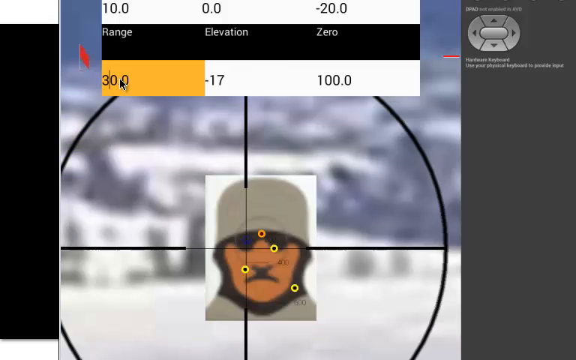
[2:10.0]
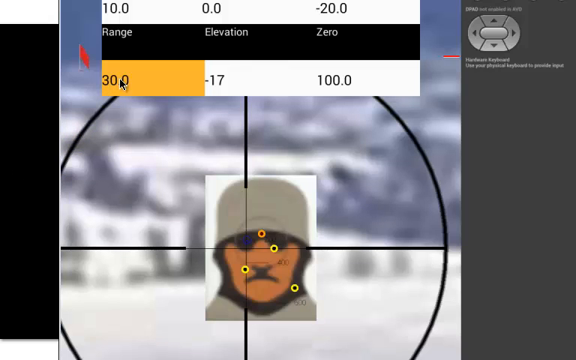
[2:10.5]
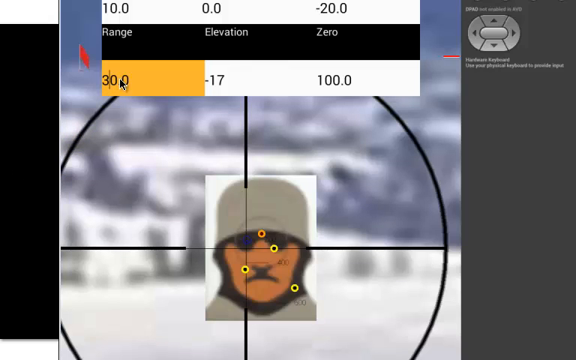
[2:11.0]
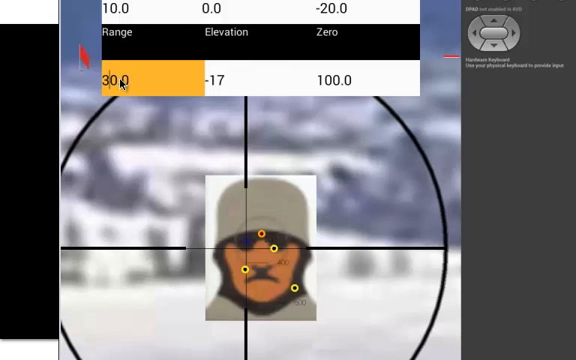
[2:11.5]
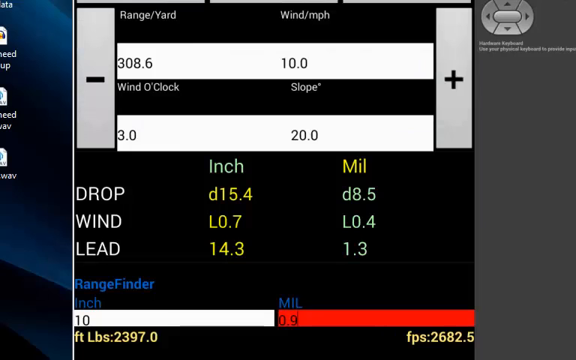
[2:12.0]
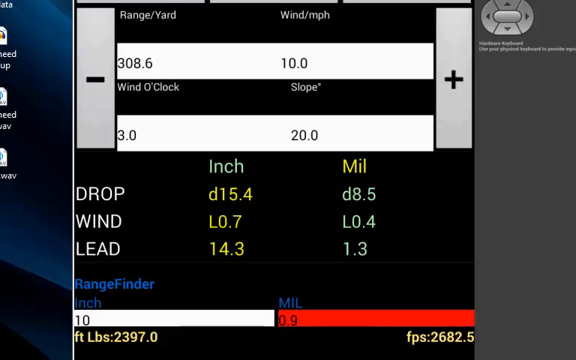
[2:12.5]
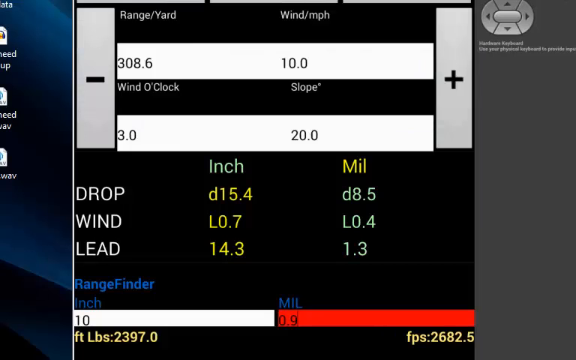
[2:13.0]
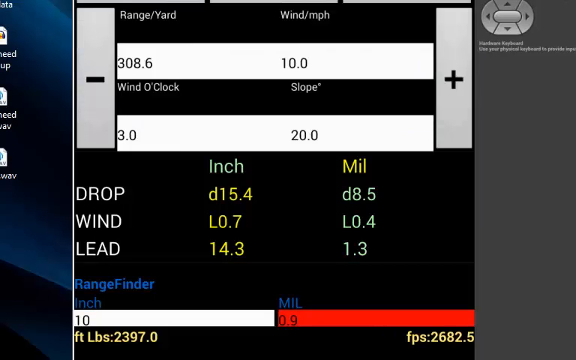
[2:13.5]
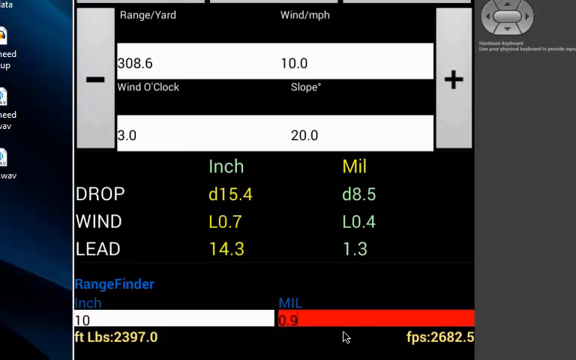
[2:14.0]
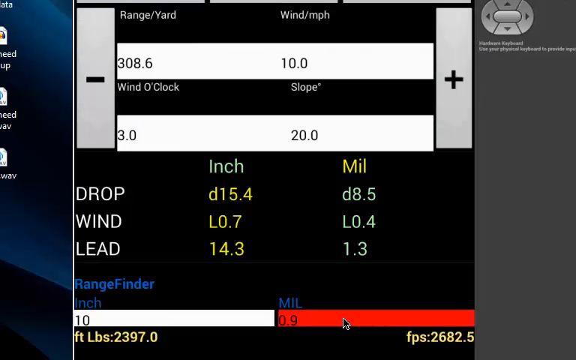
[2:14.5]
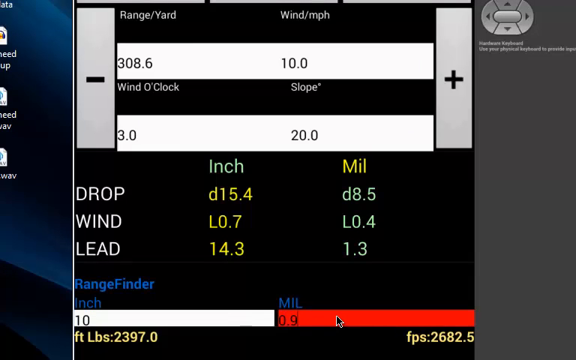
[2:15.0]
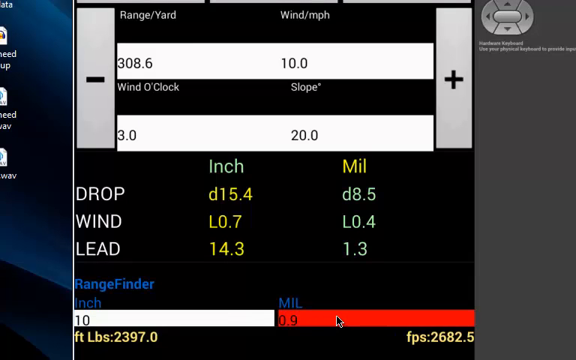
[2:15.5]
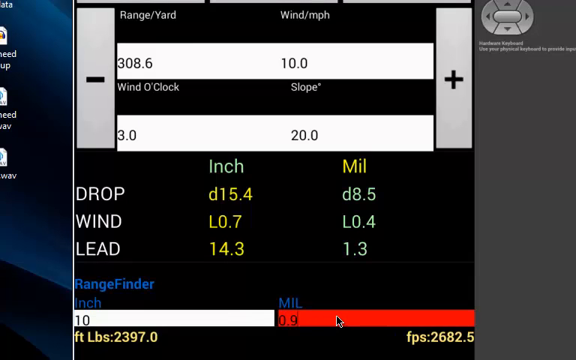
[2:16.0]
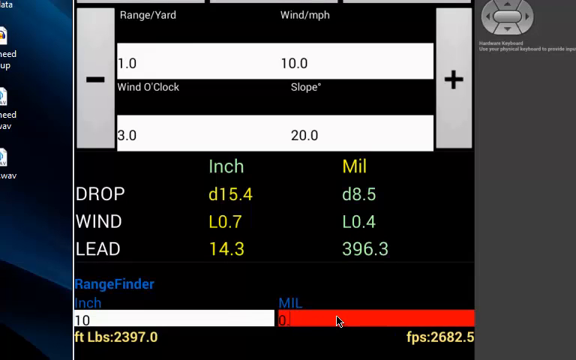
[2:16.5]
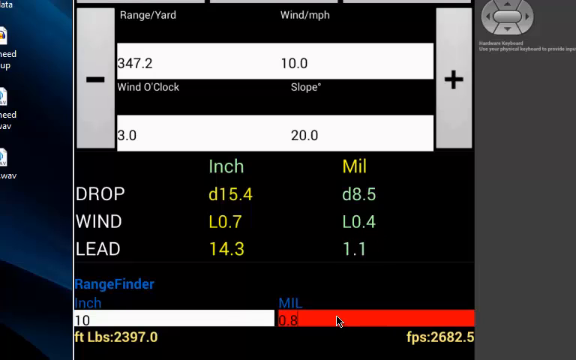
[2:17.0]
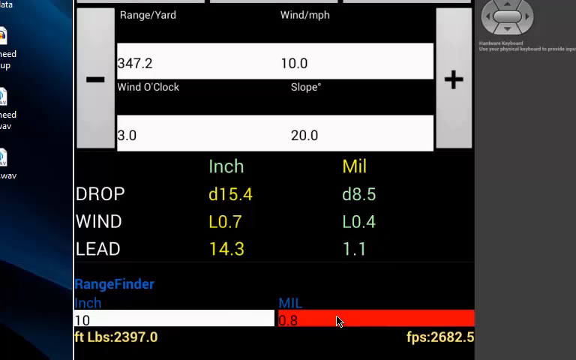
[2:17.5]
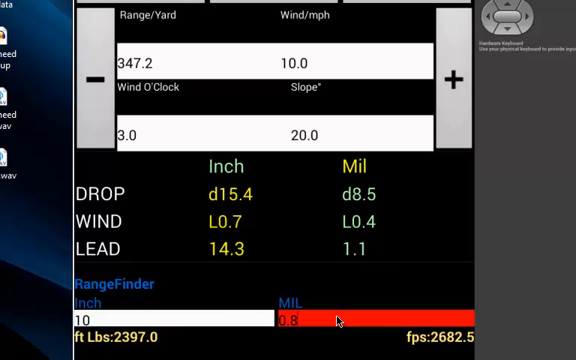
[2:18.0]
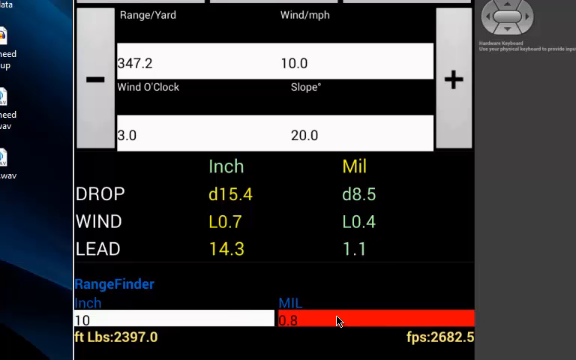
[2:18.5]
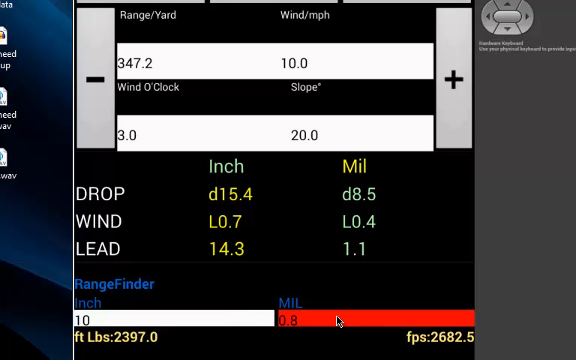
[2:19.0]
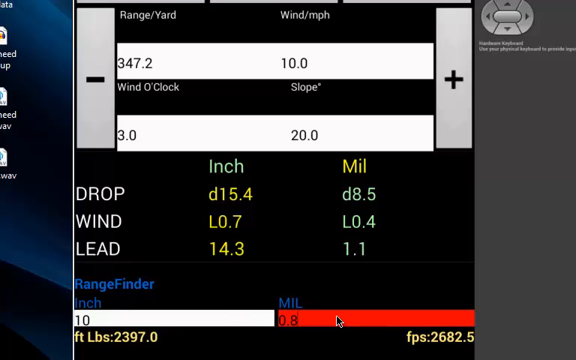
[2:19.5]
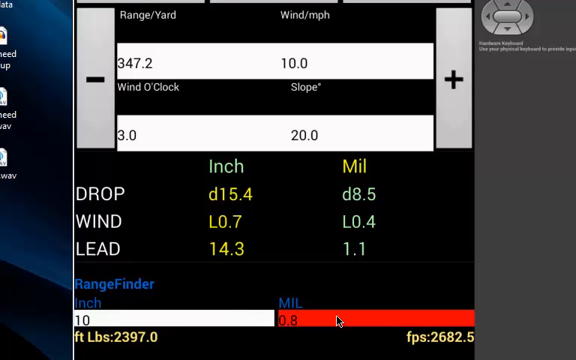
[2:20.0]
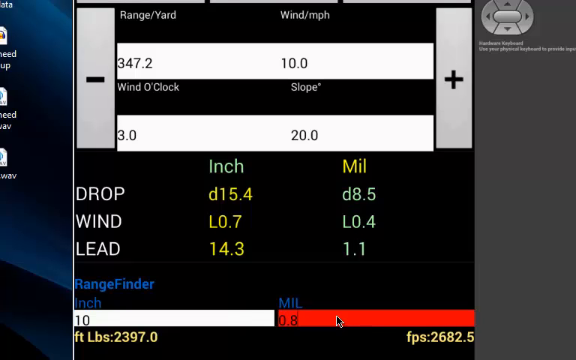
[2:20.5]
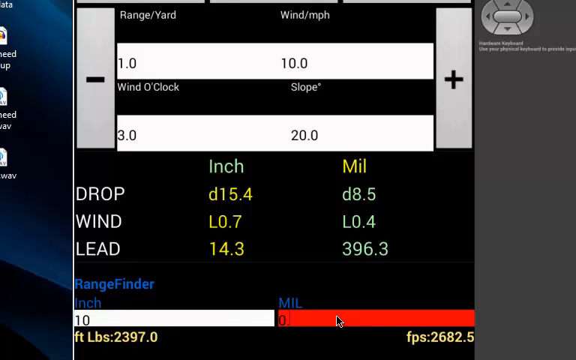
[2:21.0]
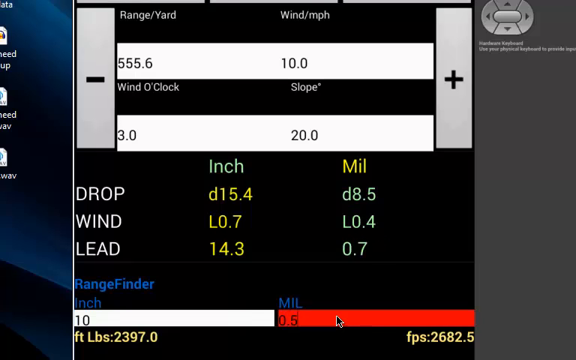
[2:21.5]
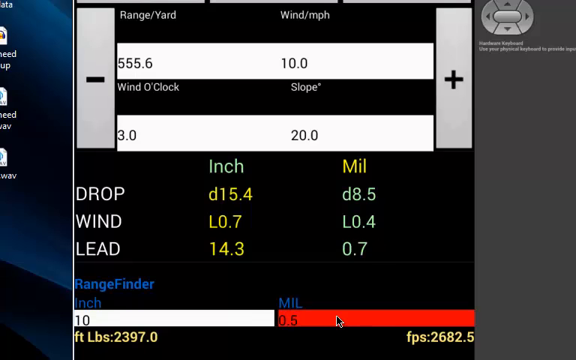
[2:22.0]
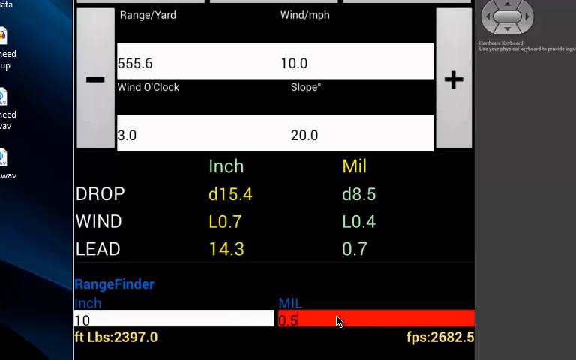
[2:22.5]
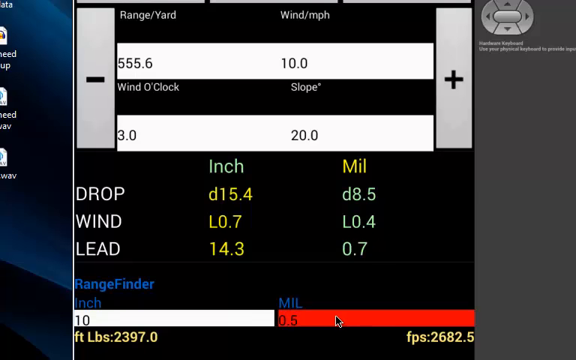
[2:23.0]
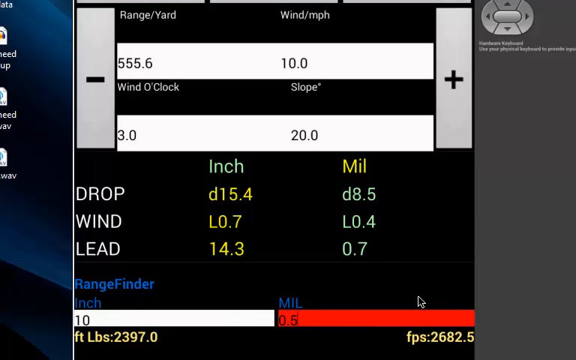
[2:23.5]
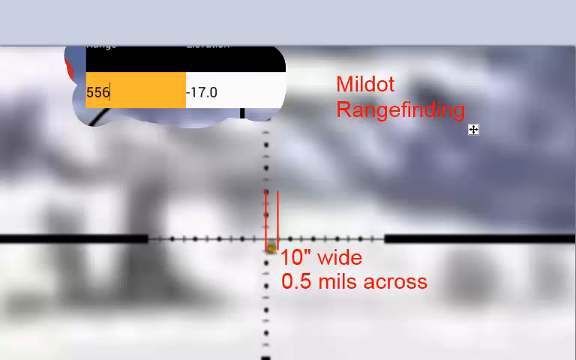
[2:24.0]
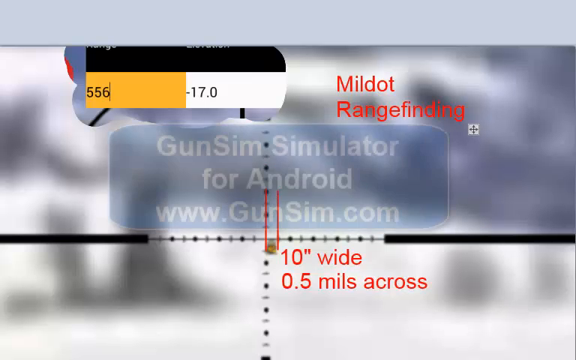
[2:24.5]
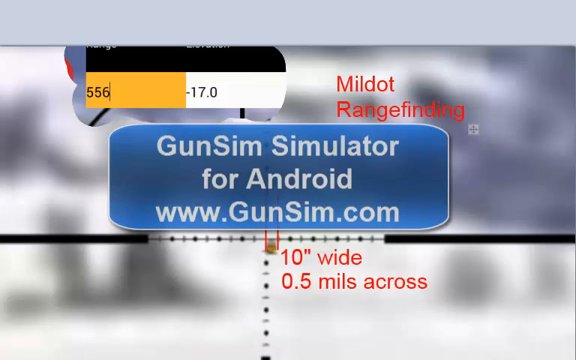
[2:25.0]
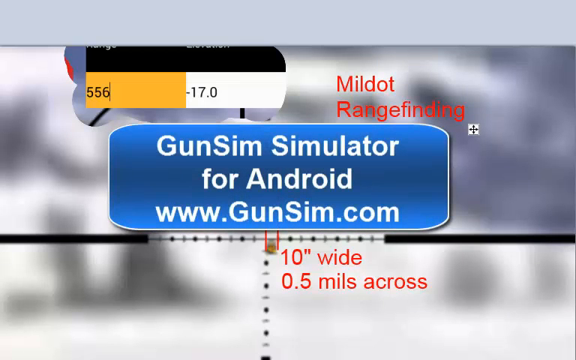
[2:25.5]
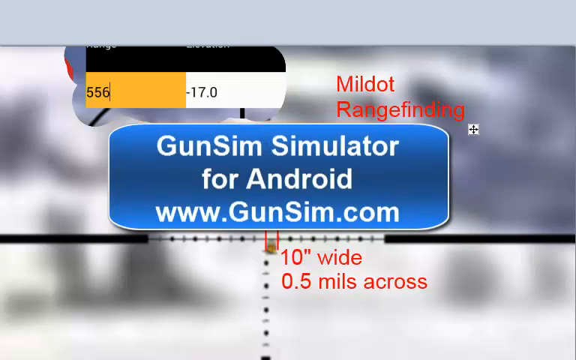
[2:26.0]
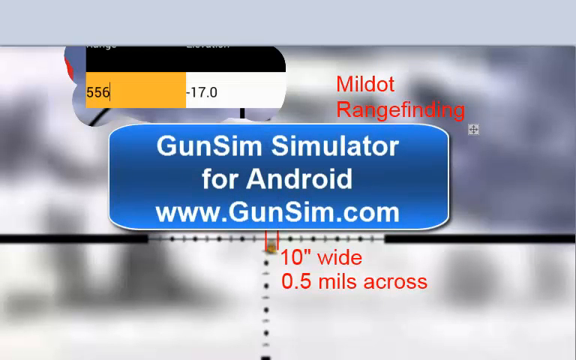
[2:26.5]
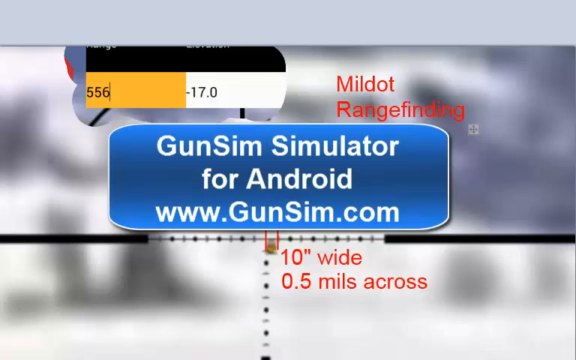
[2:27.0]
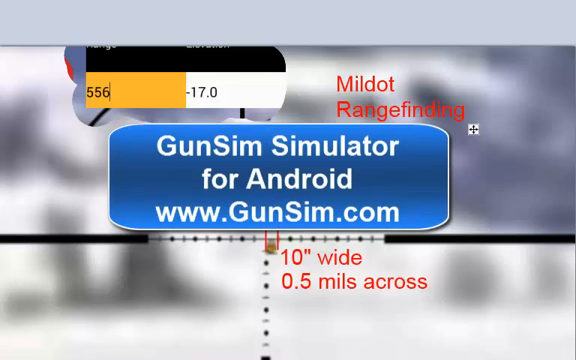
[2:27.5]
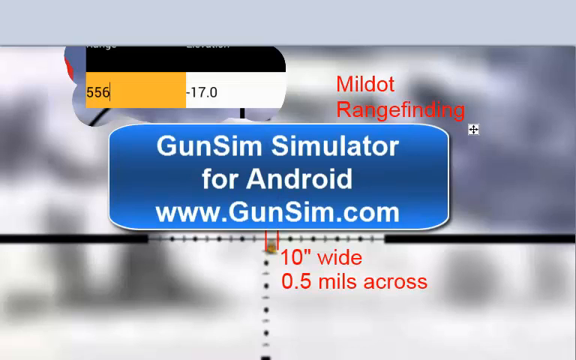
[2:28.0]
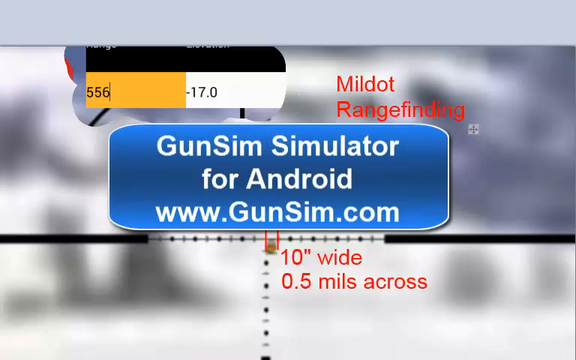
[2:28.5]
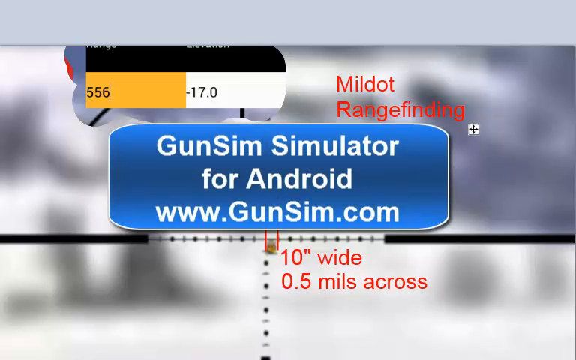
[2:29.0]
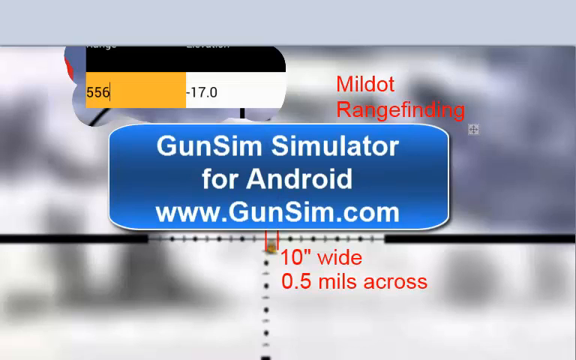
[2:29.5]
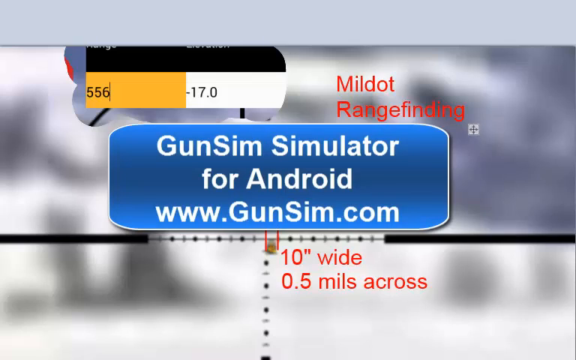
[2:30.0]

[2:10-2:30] The animated target that was shot is a man with a grayish hat, black glasses with a blue tint, a dark tan complexion and a mustache; only the neck area of his shirt is visible, the same color as the hat. He faces the screen, and four bullets have hit him: one on the left side of his face, one right at the neck, one in the right eye and one right between the eyes. The screen changes, and at the bottom white text reads "drop", "wind" and "lead", one word under the next, followed by "crossing", with yellow wording next to drop. The view then switches to one like the setup for target practice, showing the blue rectangle outlined in white from the beginning again, with white text reading "GunSim Simulator", "for Android" and "www.gunsim.com".